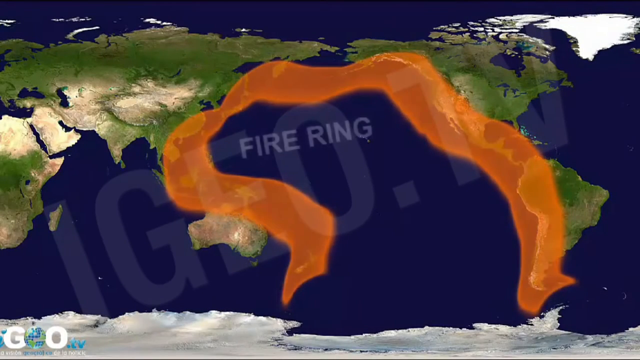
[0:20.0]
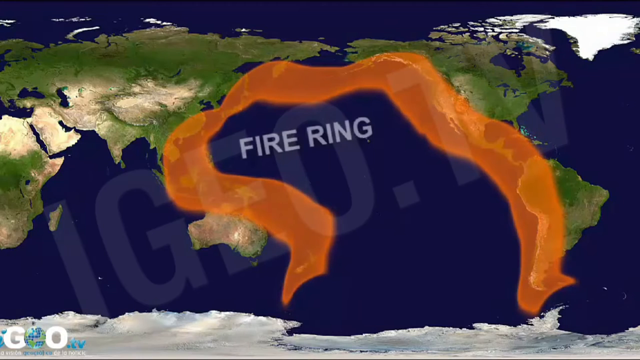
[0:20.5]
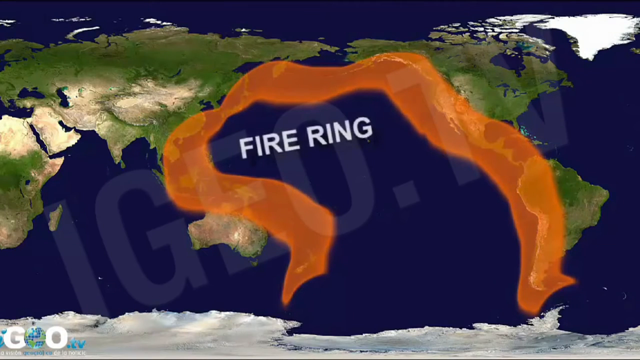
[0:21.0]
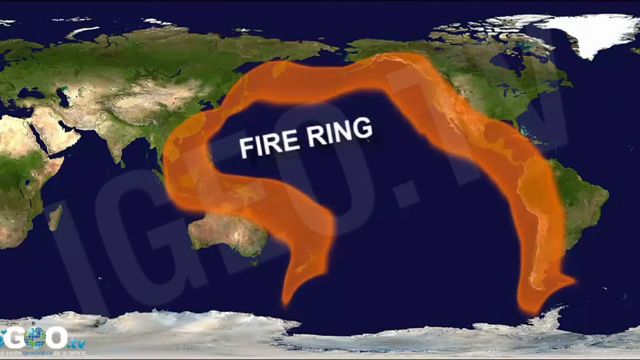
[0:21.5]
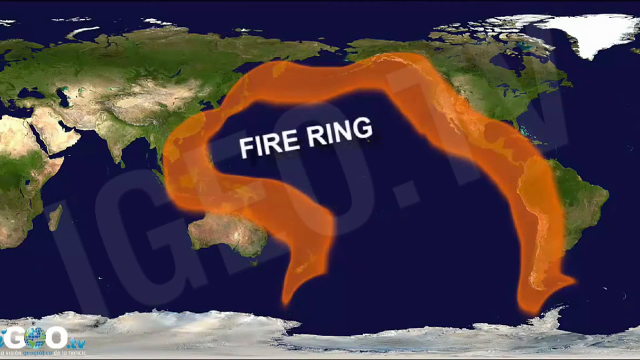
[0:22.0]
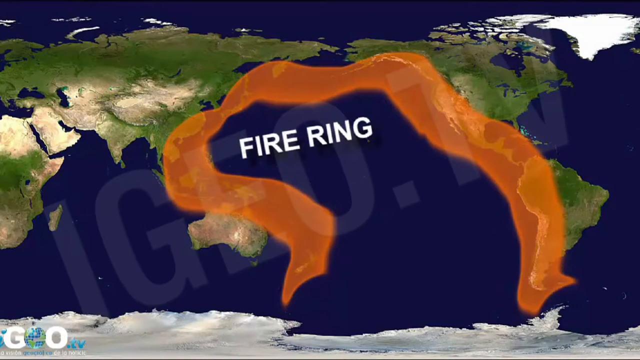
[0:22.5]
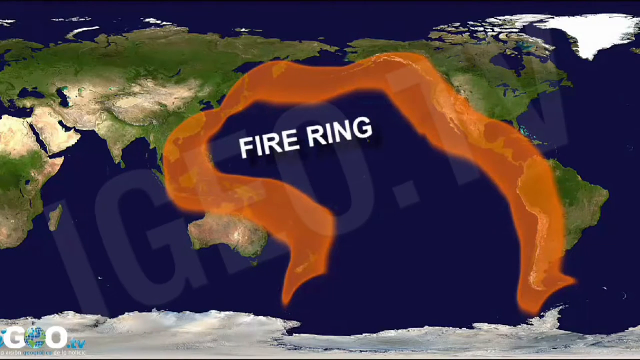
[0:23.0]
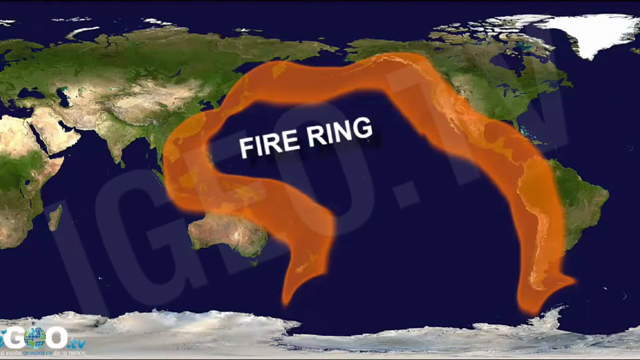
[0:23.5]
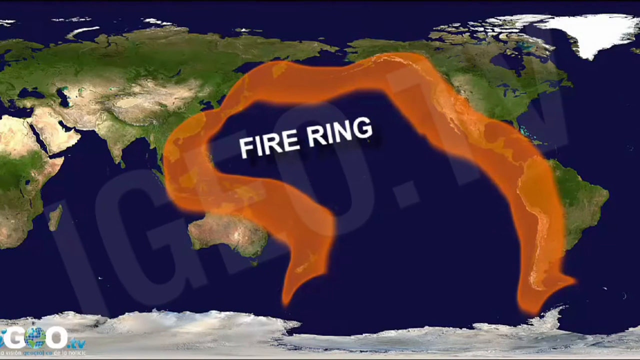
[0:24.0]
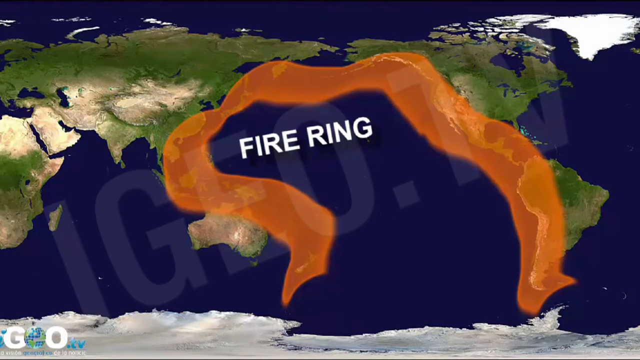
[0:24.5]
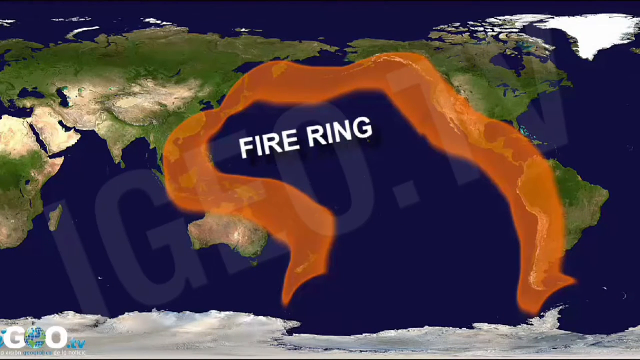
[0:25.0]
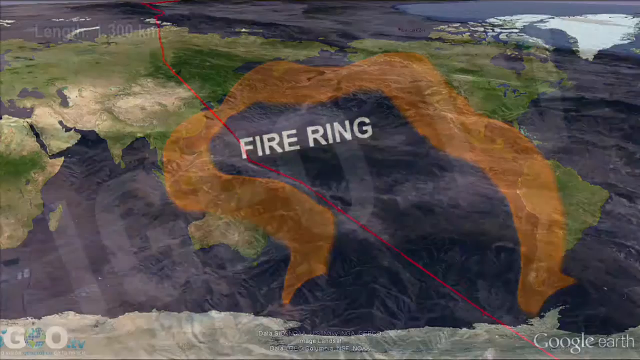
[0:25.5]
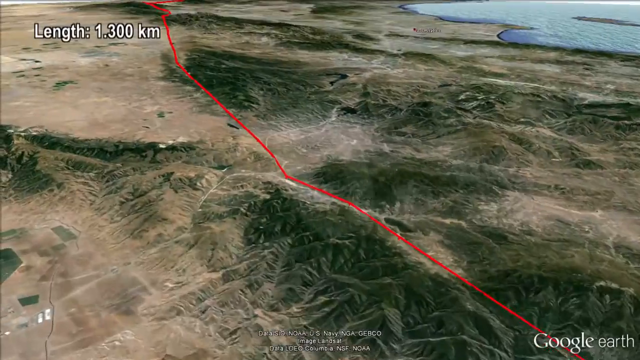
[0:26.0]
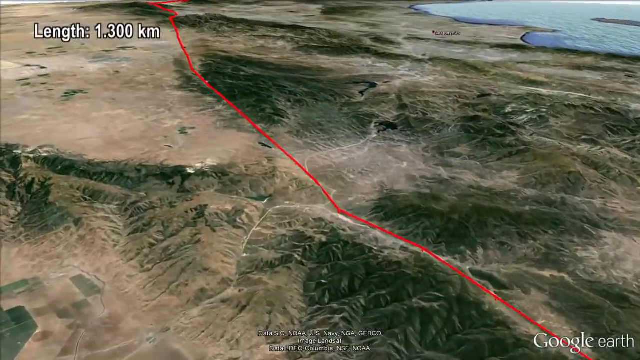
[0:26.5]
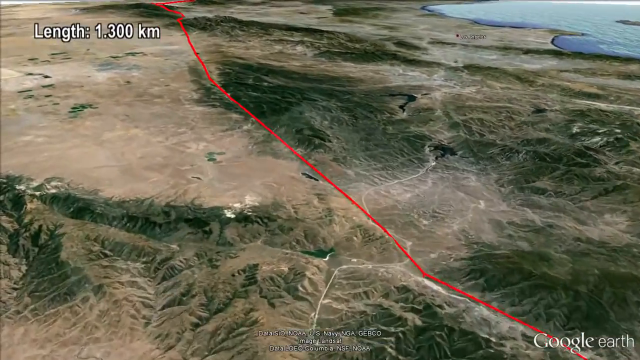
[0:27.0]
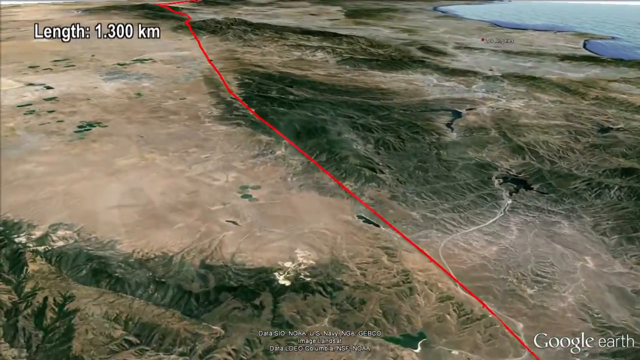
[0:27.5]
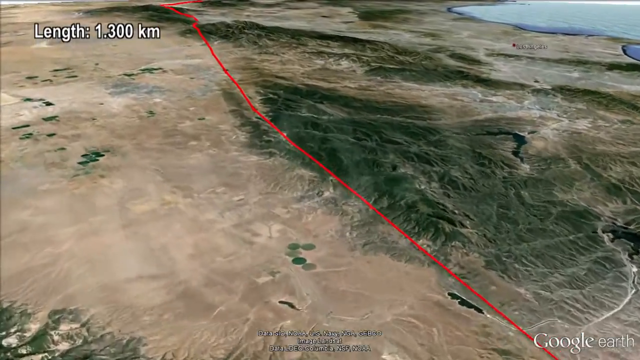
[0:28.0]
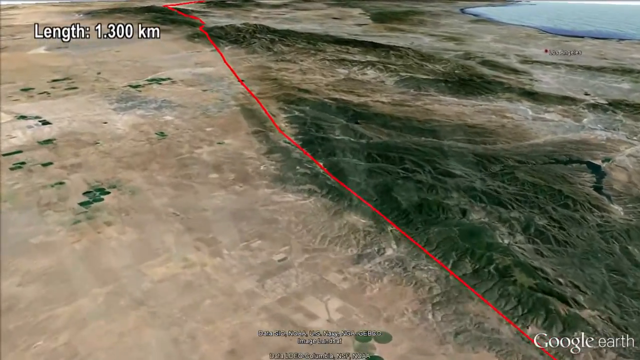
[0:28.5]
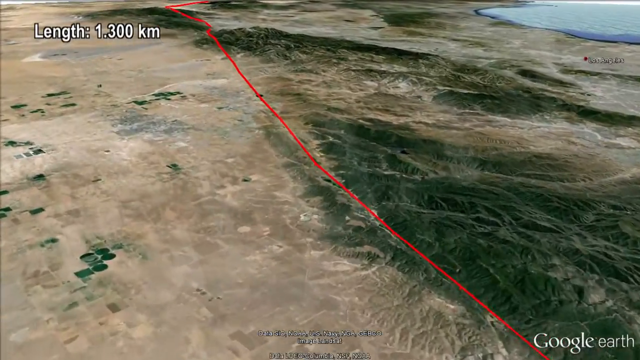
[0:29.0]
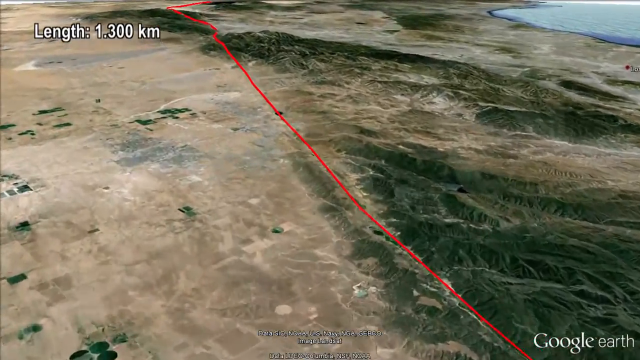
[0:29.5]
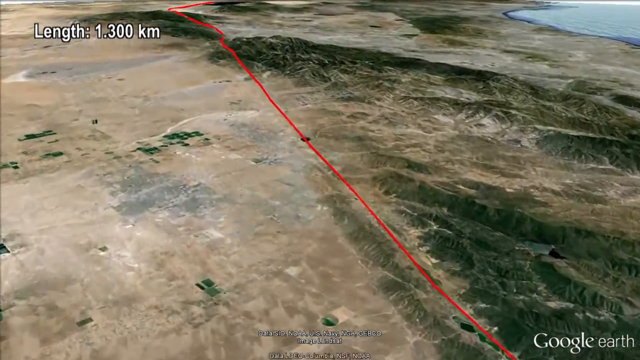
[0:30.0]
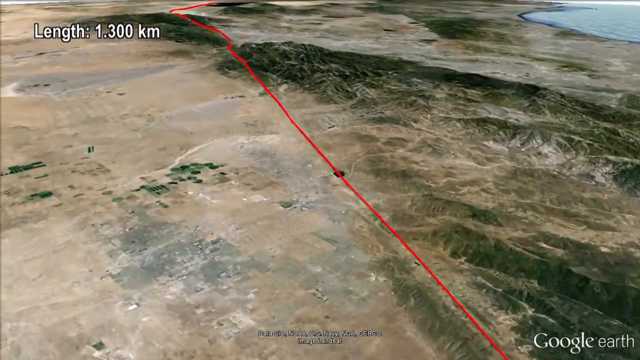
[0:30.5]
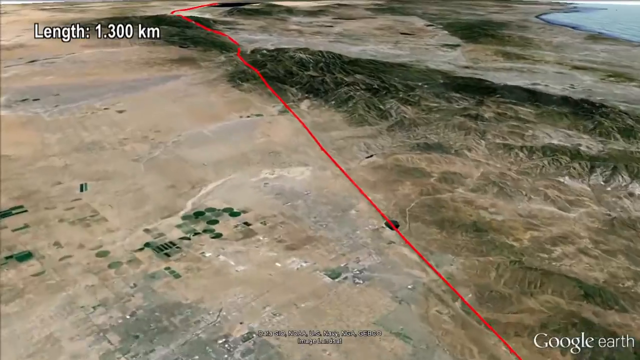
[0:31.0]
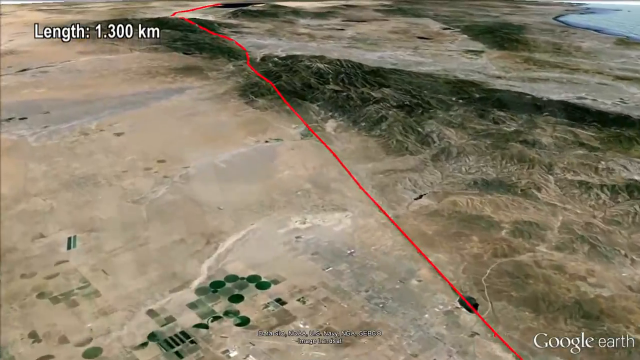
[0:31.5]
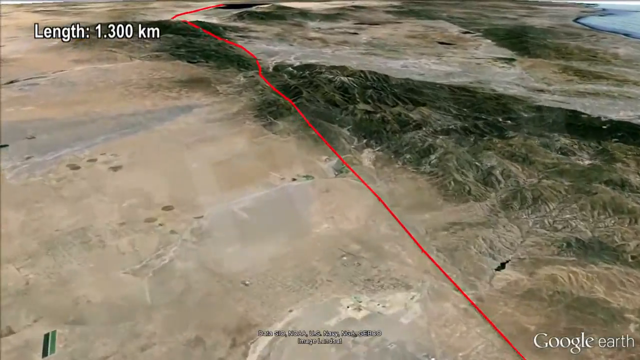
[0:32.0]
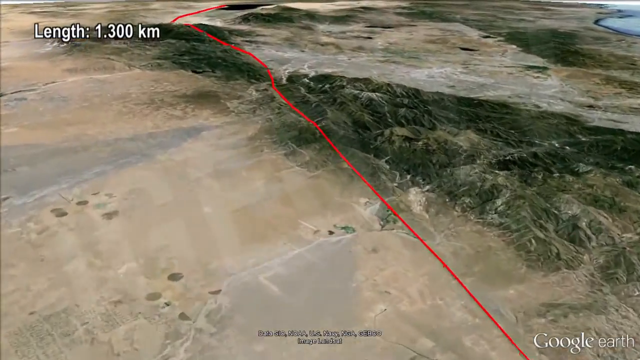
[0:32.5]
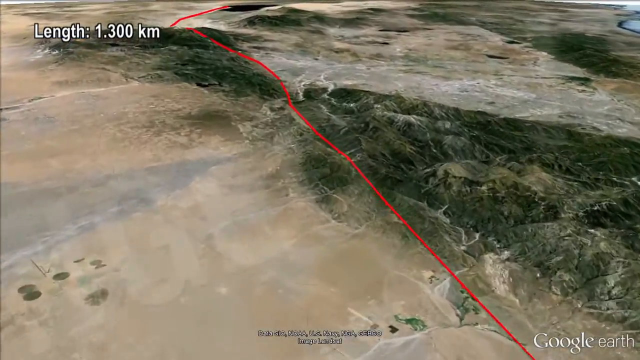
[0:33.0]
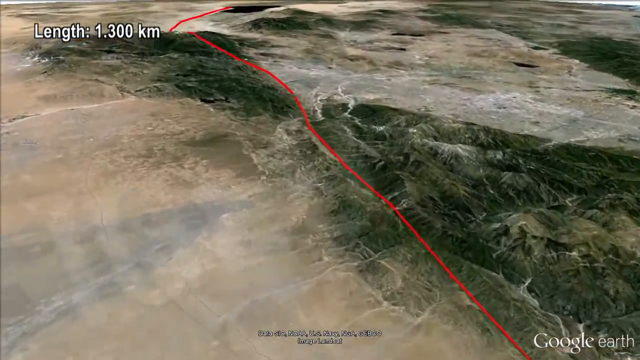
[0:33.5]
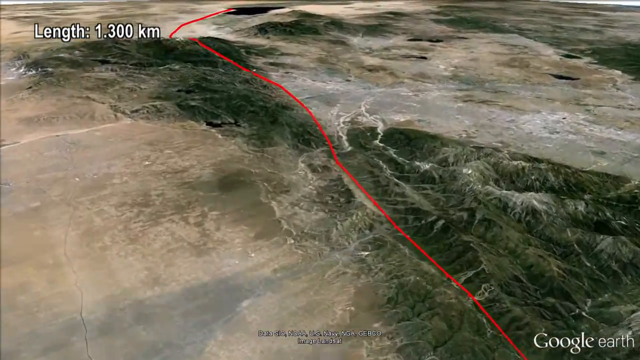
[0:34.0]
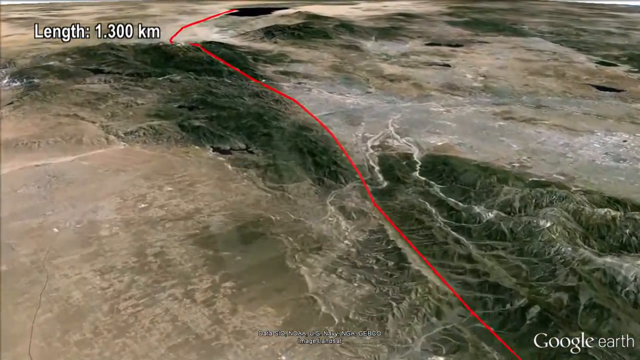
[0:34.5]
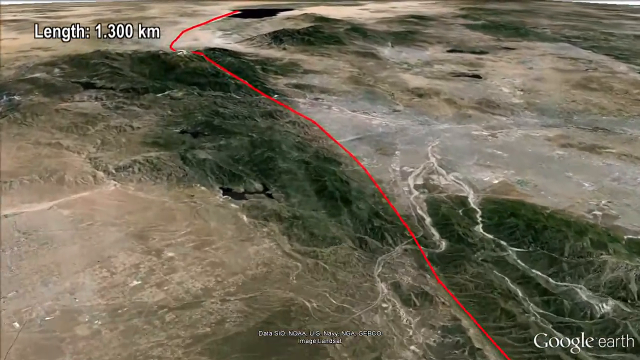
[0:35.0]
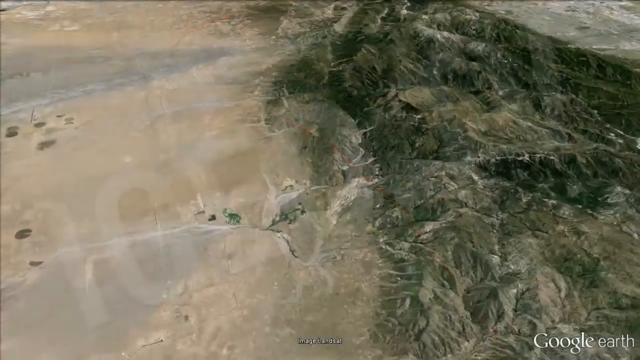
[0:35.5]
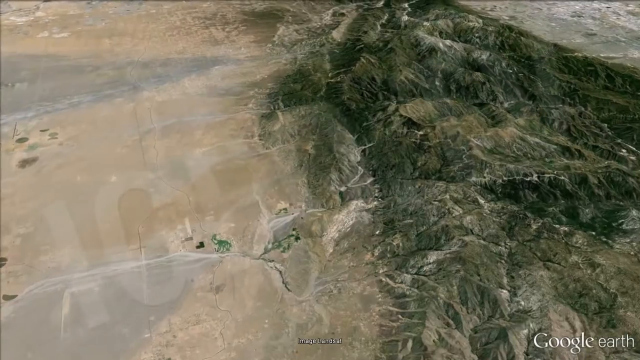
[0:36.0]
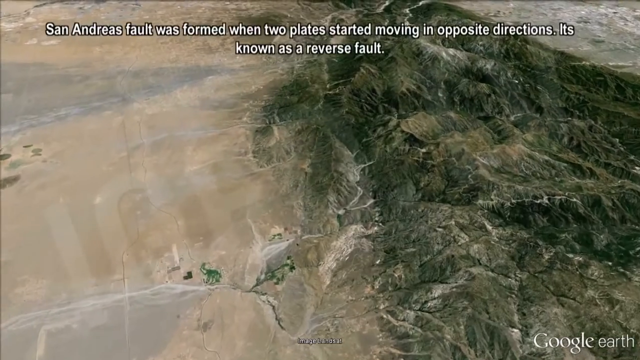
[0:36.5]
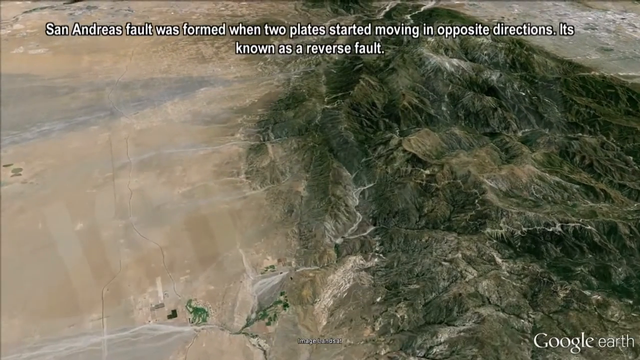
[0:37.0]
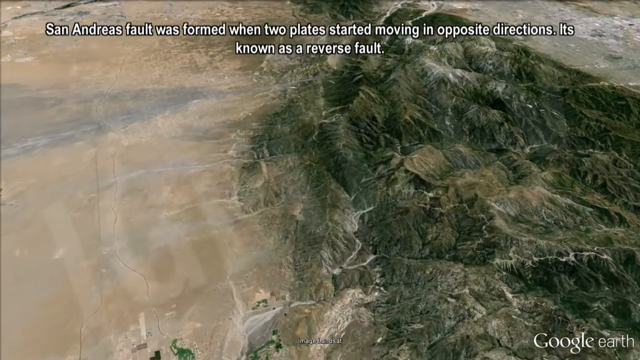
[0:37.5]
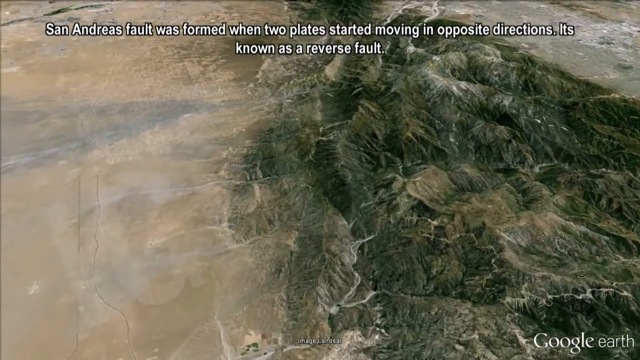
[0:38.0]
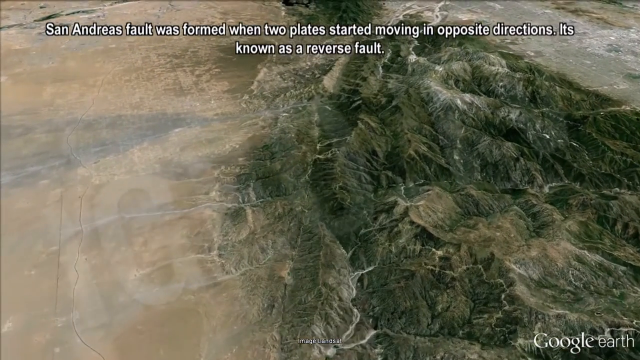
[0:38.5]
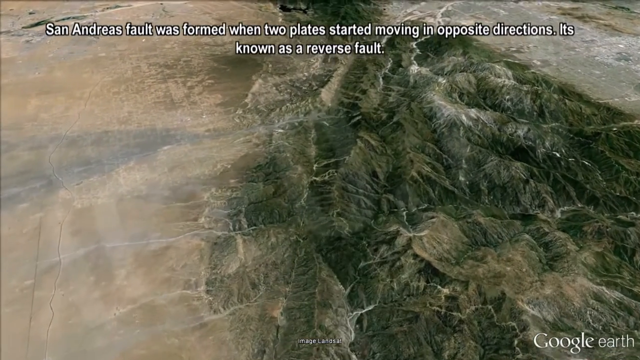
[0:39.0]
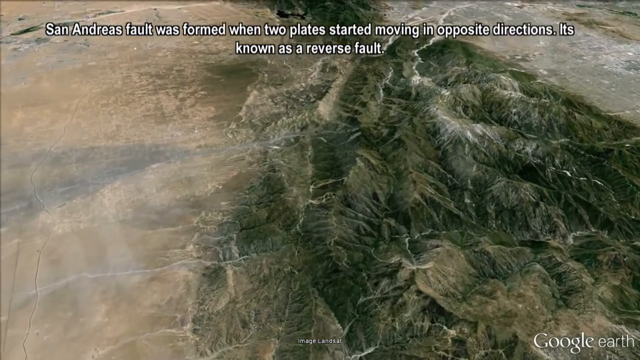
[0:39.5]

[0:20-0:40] The video seems to be about earthquakes. It shows the Ring of Fire, running from past Australia up through Asia, around Alaska, over to Washington, Oregon and California, down to Mexico and all the way to the tip of South America, marking where volcanoes and earthquakes are. The San Andreas Fault is then shown as a red line running all the way through California, with text saying the length is 1,300 kilometers. Text reads that the San Andreas Fault was formed when two plates started moving in opposite directions and that it is known as a reverse fault. A quick scene of the fault follows, showing the continental crust and the oceanic crust going under it.